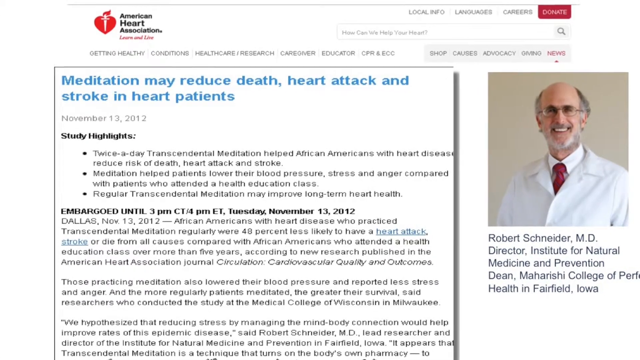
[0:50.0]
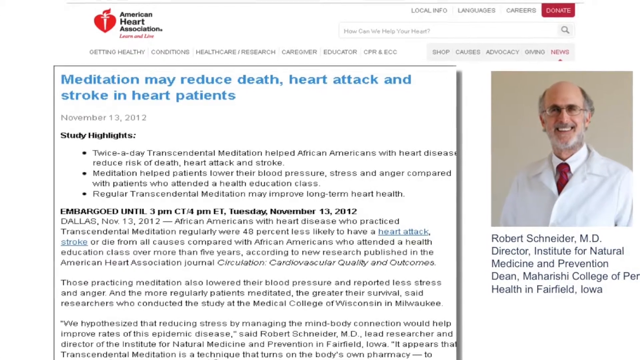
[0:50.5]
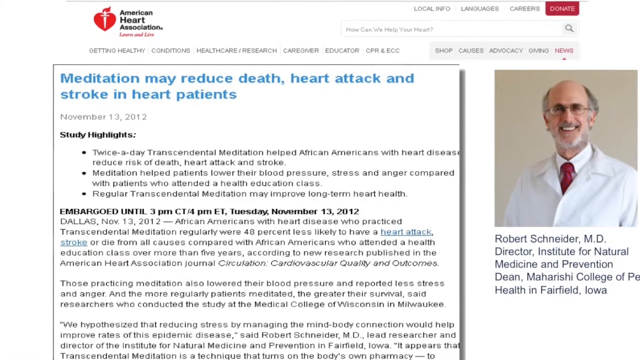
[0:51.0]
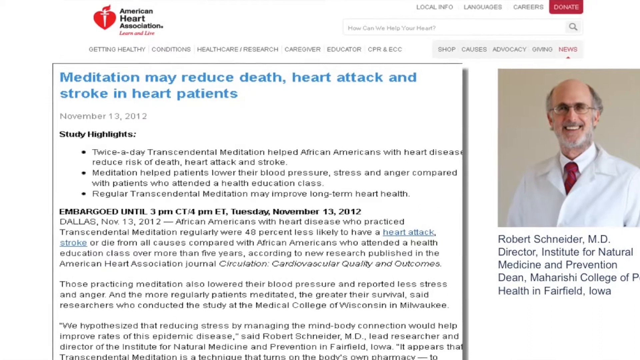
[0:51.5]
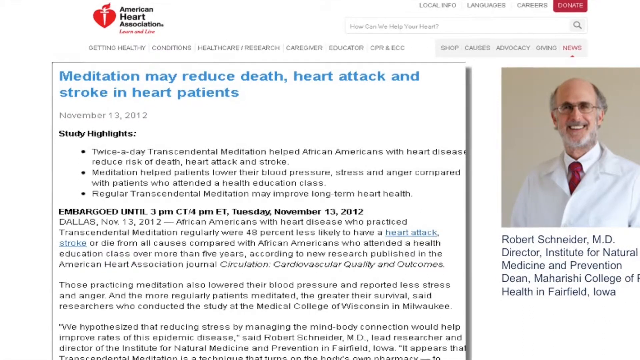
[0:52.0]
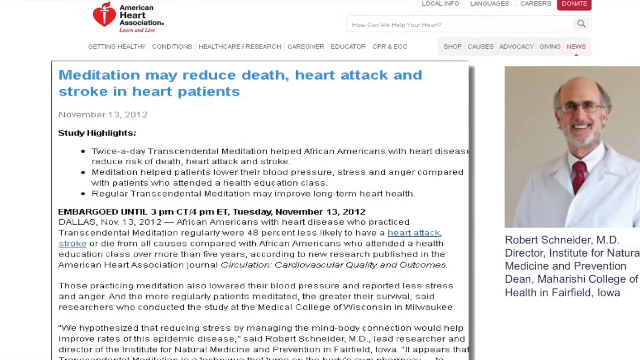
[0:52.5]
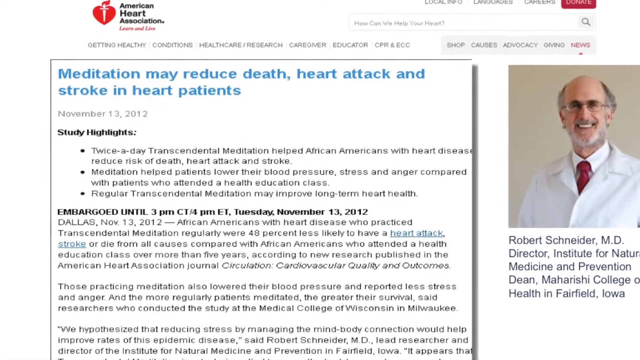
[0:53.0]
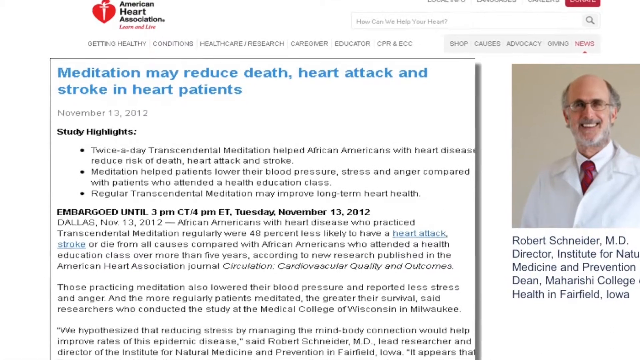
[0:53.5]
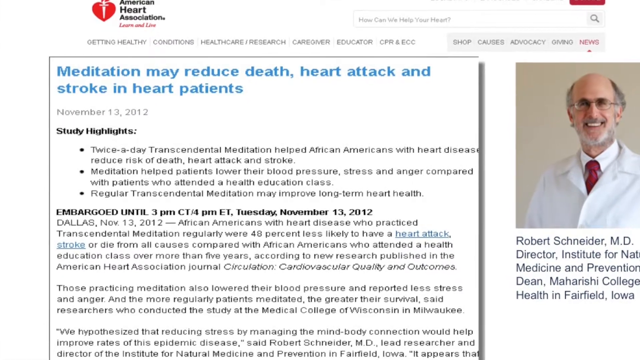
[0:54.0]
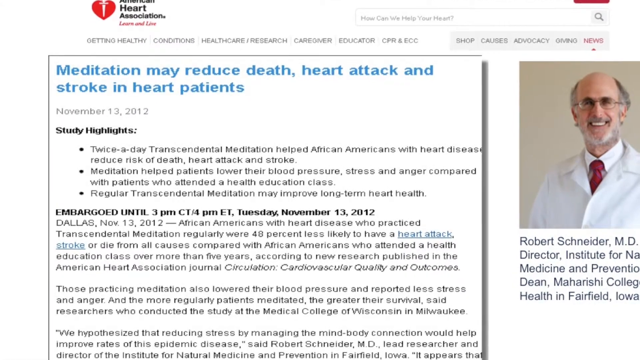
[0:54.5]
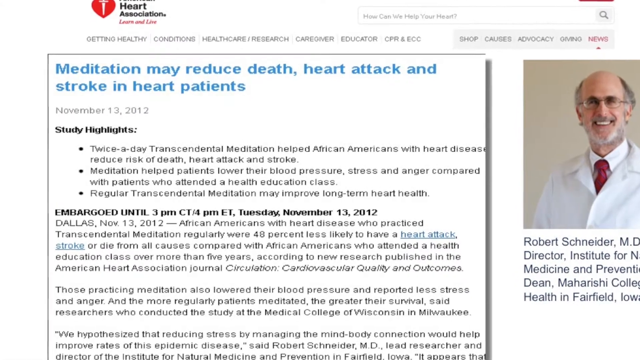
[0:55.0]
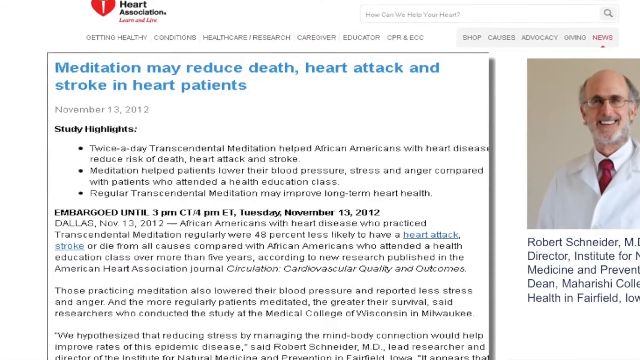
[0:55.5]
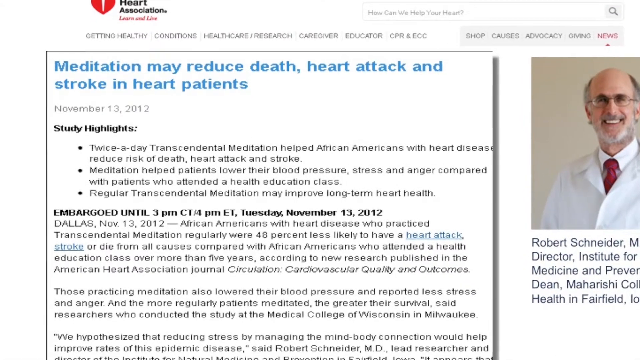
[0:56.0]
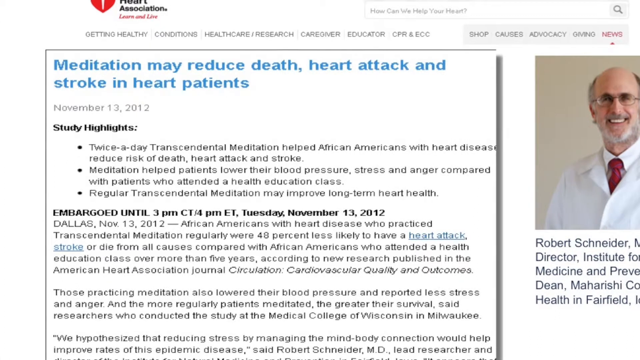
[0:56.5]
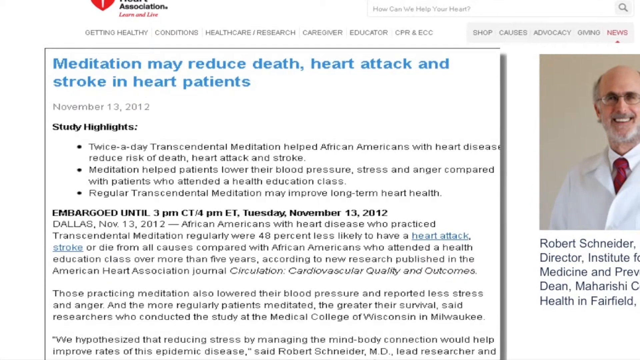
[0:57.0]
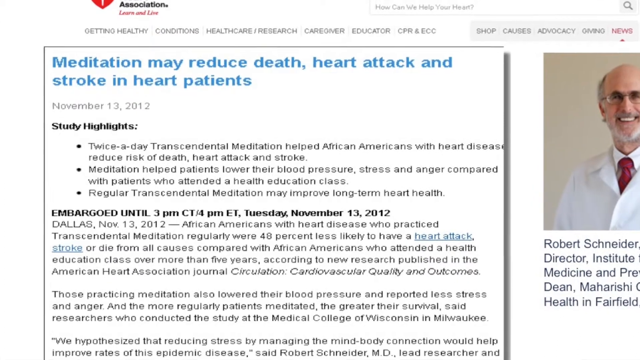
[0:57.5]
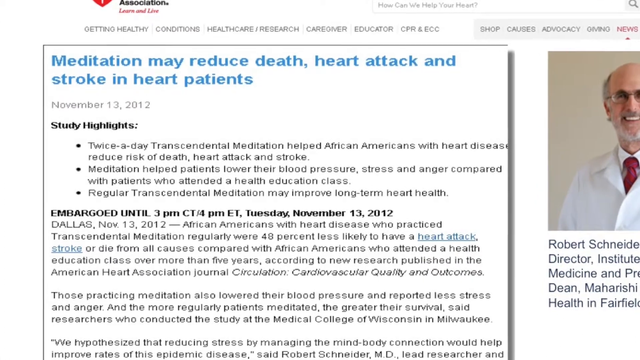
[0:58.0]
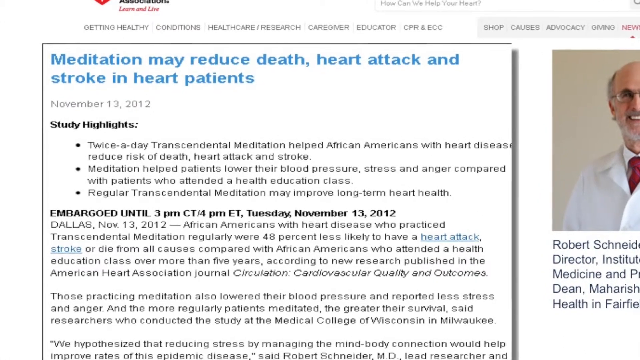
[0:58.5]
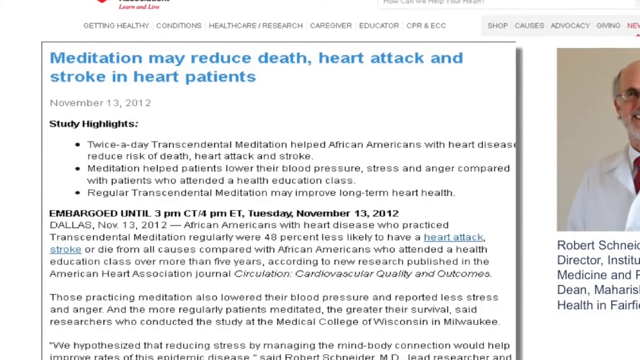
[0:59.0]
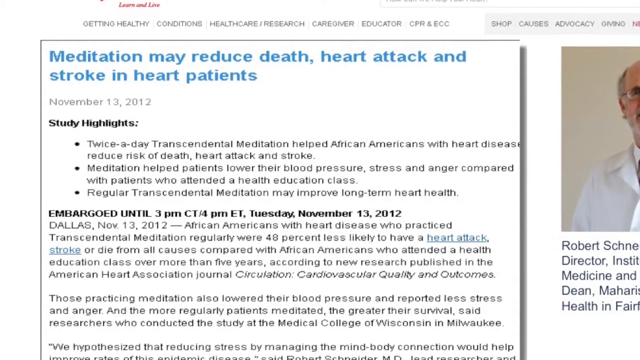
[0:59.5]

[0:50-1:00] A screen grab of a website from the American Heart Association shows an article on the left side and, on the right side, a photograph of the writer: an older man wearing a white lab coat, looking at the camera and smiling. He is labeled "Robert Snyder, MD, Director, Institute for Natural Medicine and Prevention, Dean, Maharishi College of Perfect Health in Fairfield, Iowa." The video slowly zooms in on the article, which starts: "Study highlights twice a day transcendental meditation helped African Americans with heart disease reduce risk of death, heart attack, and stroke. Meditation helped patients lower their blood pressure, stress, and anger compared with patients who attended a health education class. Regular transcendental meditation may improve long-term heart health. Embargoed until 3 p.m. CT, 4 p.m. UT, Tuesday, November 13, 2012. Dallas, November 13, 2012. African Americans with heart disease who practice transcendental meditation regularly were 48% less likely to have a heart attack, stroke, or die from all causes compared with African Americans who attended a health education class over more than five years, according to new research published in the American Heart Association journal, Circulation, Cardiovascular Quality, and Outcomes."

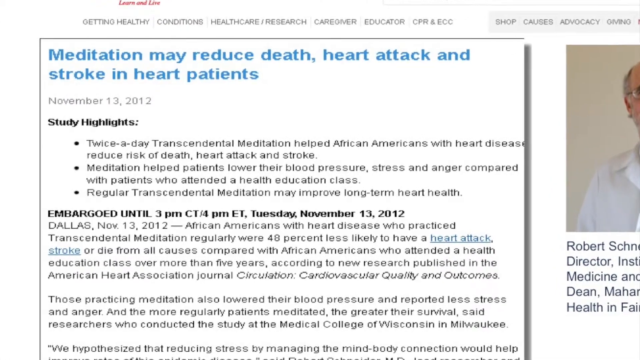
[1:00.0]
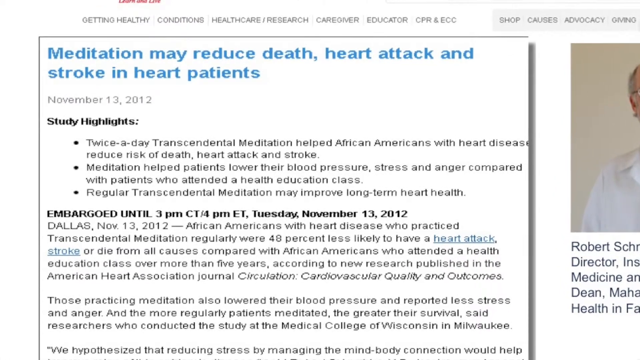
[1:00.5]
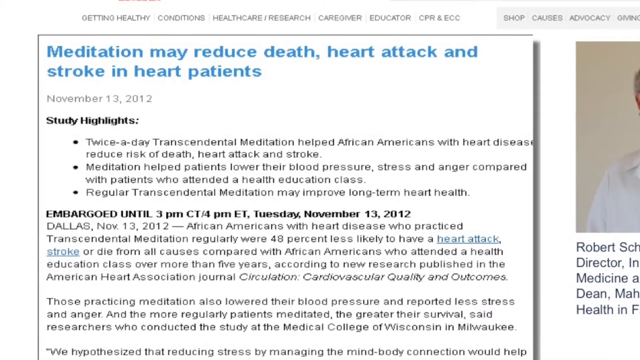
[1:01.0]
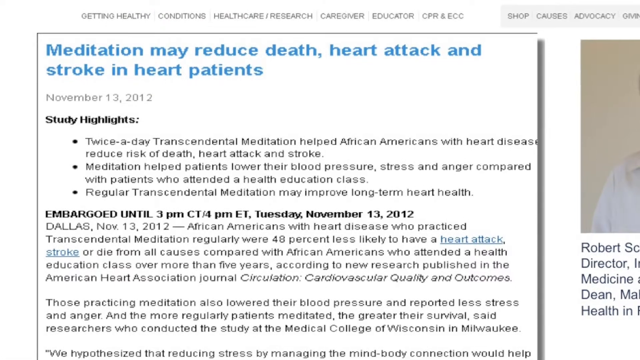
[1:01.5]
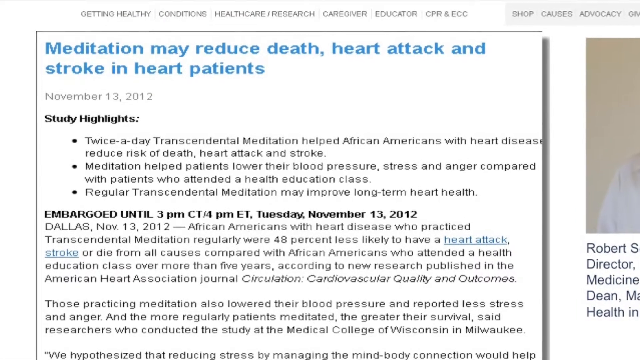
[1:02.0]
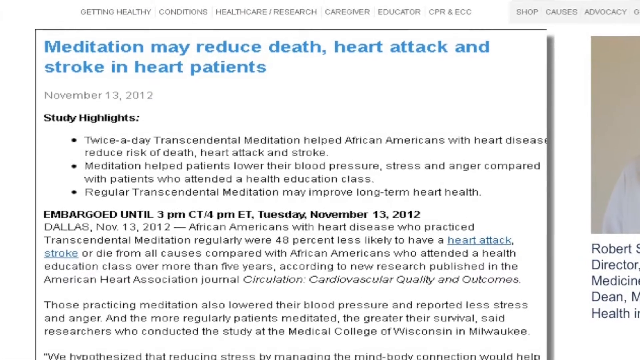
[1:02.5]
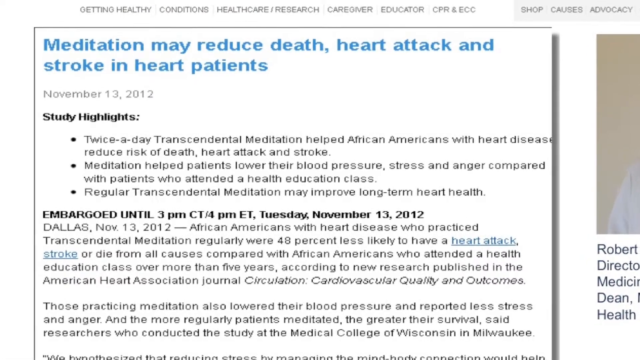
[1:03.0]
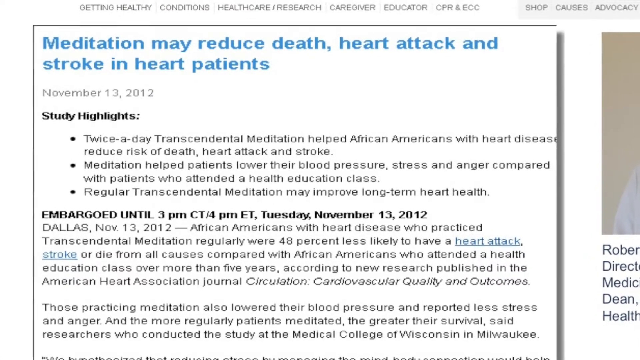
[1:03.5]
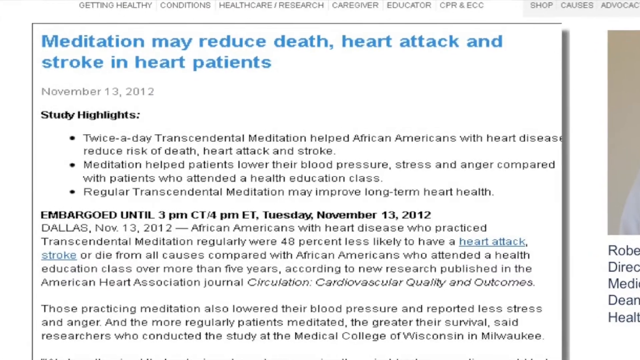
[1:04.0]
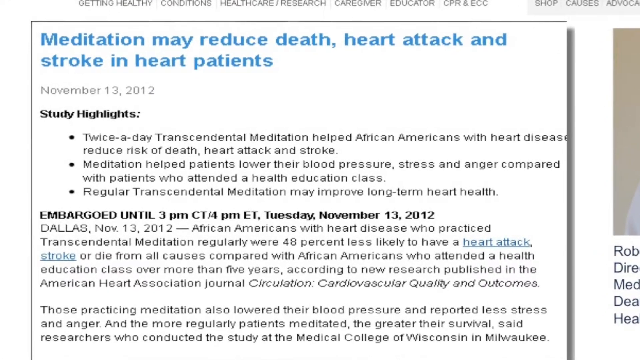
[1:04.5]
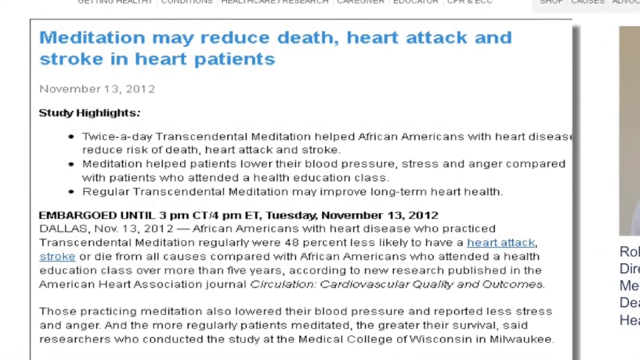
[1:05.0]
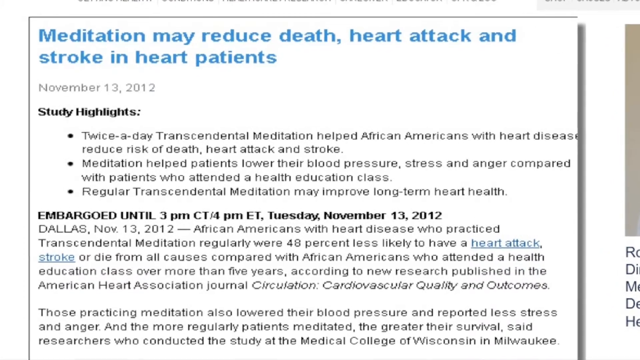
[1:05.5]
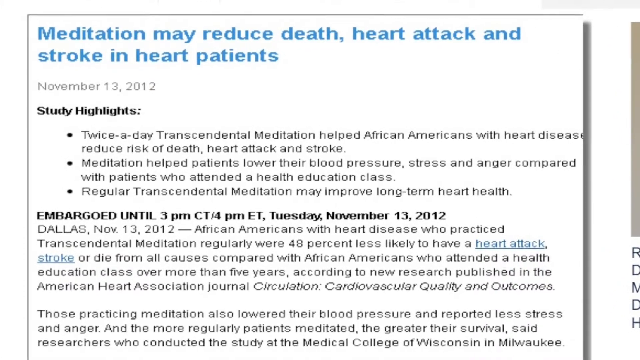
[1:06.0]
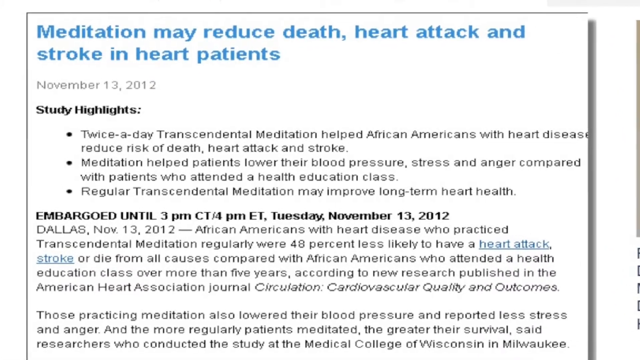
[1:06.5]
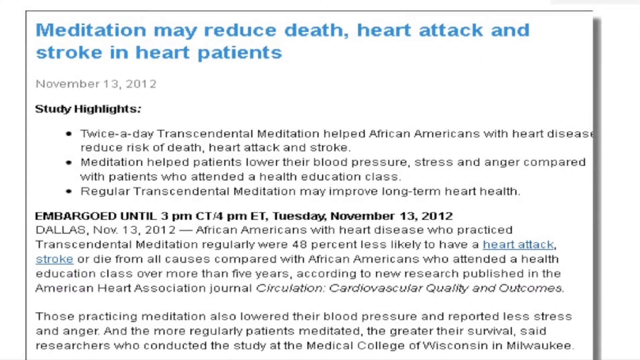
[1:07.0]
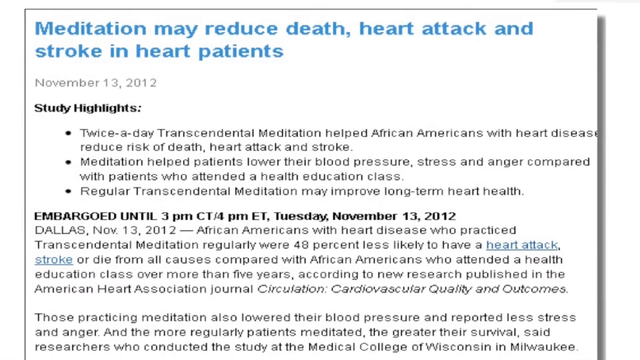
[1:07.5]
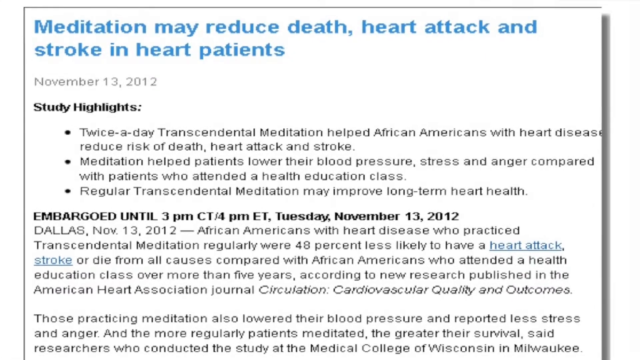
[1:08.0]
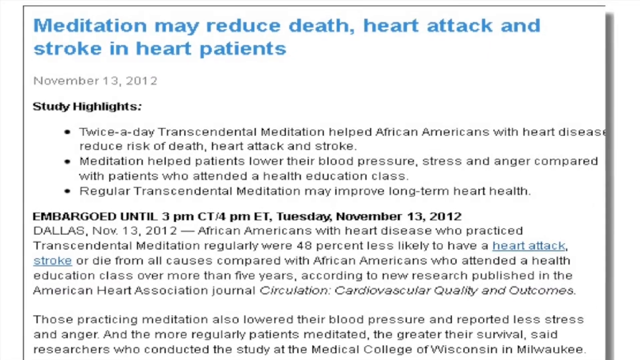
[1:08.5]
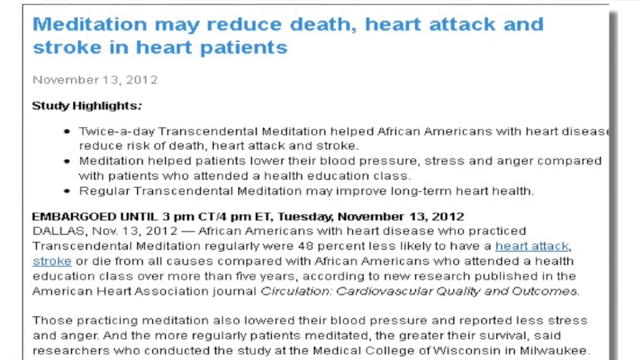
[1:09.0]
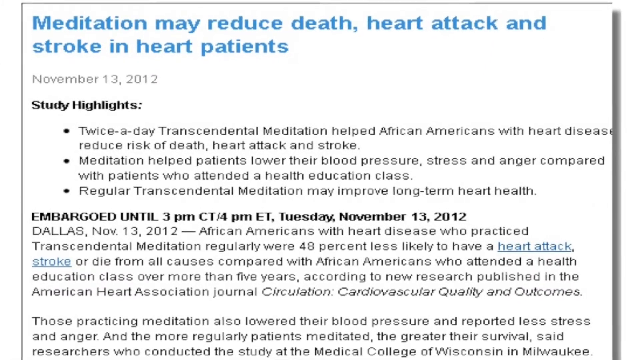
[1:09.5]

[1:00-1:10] A screenshot of an article on a webpage is shown: multiple lines of text in a rectangle with a black border. The text, starting at the top, reads "Transcendental Meditation May Reduce Death, Heart Attack, and Stroke in Heart Patients. November 13, 2012 Study Highlights Twice-a-Day Transcendental Meditation Helped African Americans with Heart Disease Reduce Risk of Death, Heart Attack, and Stroke. Meditation Helped Patients Lower Their Blood Pressure, Stress, and Anger Compared with Patients Who Attended a Health Education Class. Regular Transcendental Meditation May Improve Long-Term Heart Health. Embargoed until 3 p.m. Central, 4 p.m. Eastern, Tuesday, November 13, 2012." The rest of the body of the article follows.